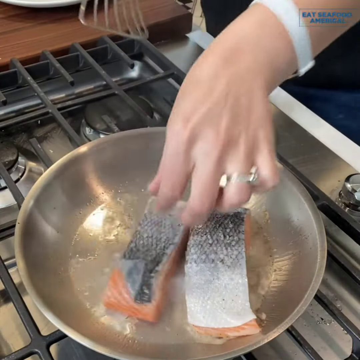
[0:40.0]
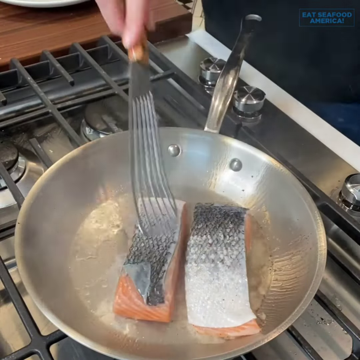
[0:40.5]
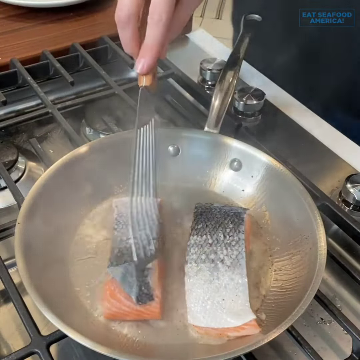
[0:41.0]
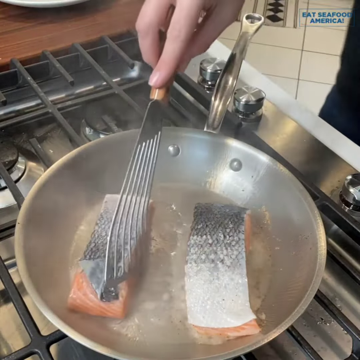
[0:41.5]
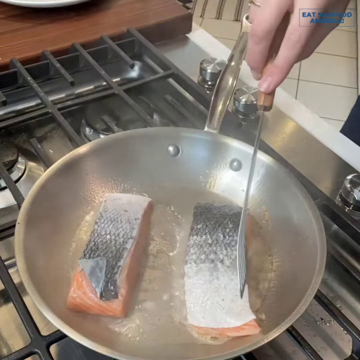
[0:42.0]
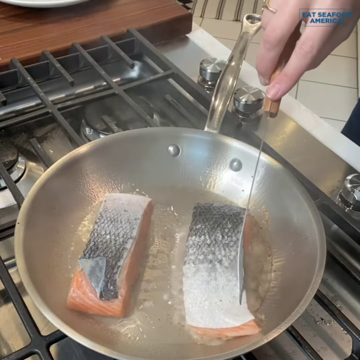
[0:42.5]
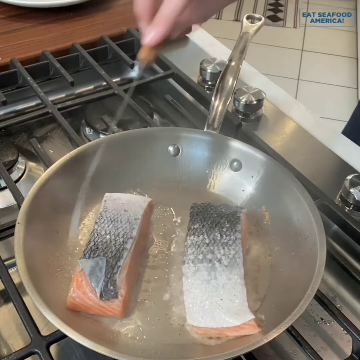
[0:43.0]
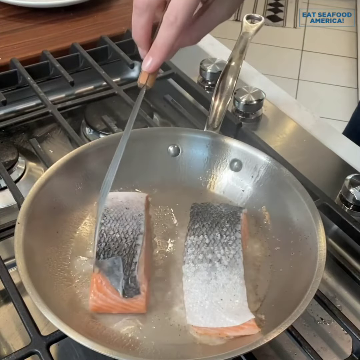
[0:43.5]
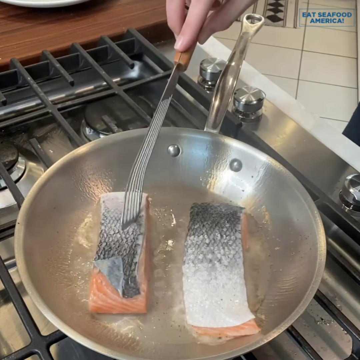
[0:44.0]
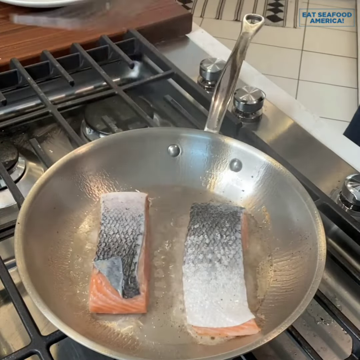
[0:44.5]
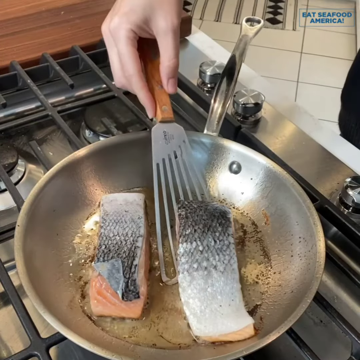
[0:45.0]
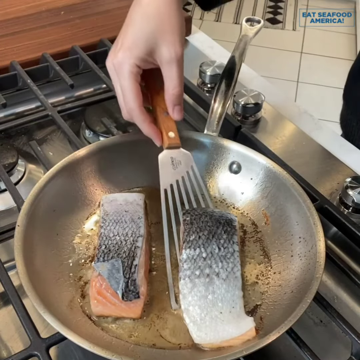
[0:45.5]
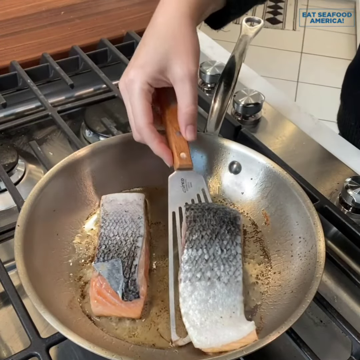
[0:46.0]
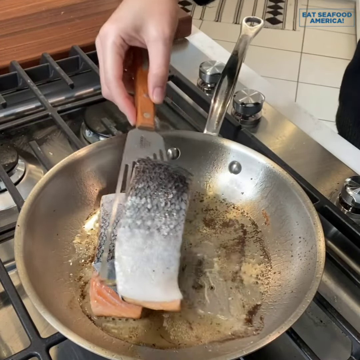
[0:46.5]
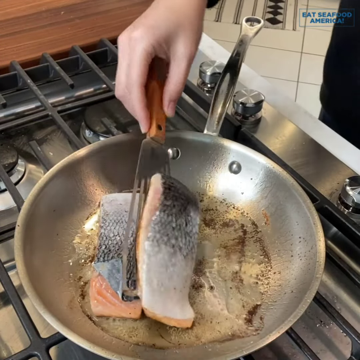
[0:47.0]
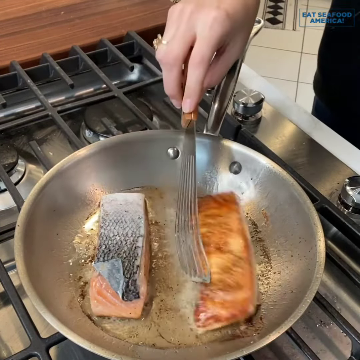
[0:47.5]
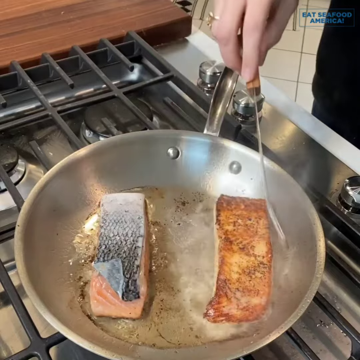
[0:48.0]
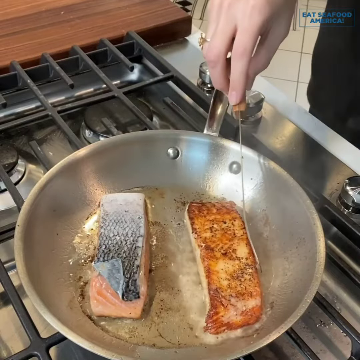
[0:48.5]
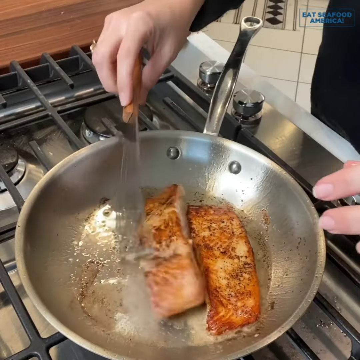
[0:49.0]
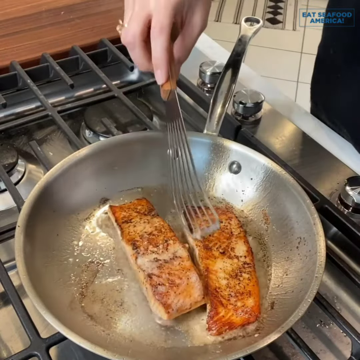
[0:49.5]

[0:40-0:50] The fish is frying in oil on the fire. A human hand uses a spoon meant for frying to adjust the position of the fish, flipping it over to the other side so that it does not stick to the frying pan.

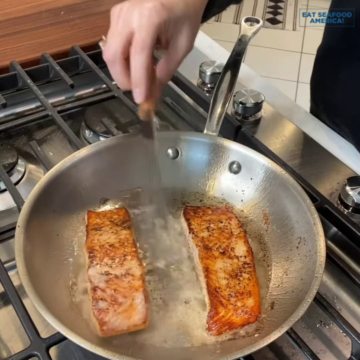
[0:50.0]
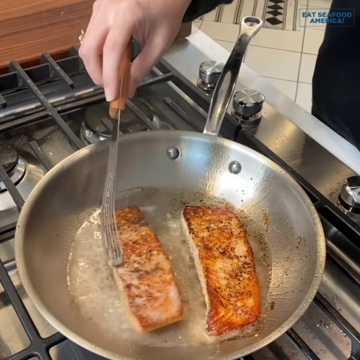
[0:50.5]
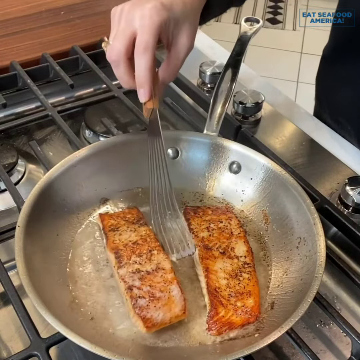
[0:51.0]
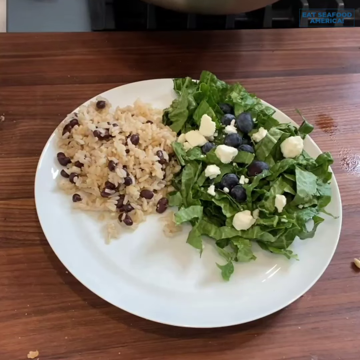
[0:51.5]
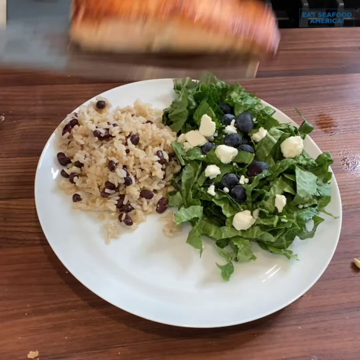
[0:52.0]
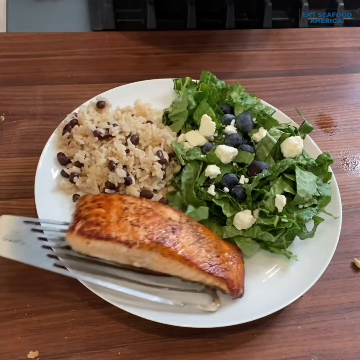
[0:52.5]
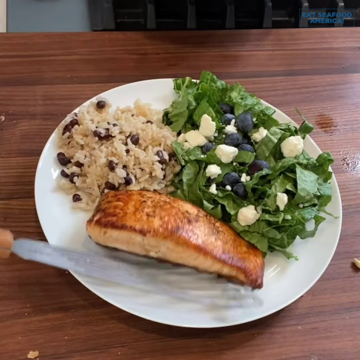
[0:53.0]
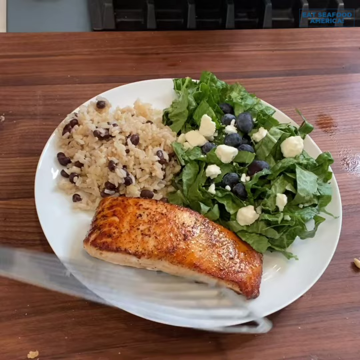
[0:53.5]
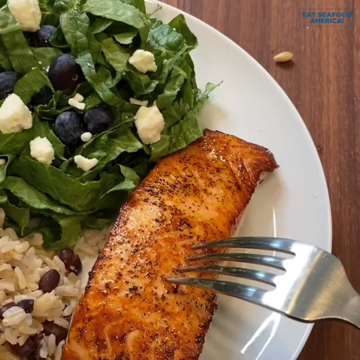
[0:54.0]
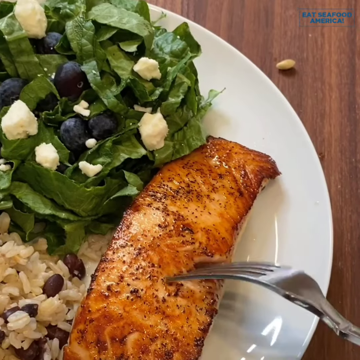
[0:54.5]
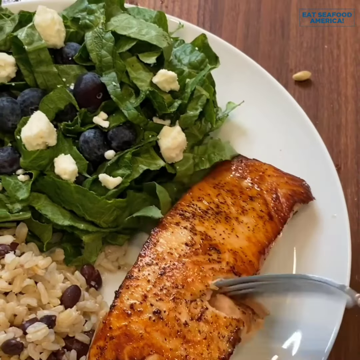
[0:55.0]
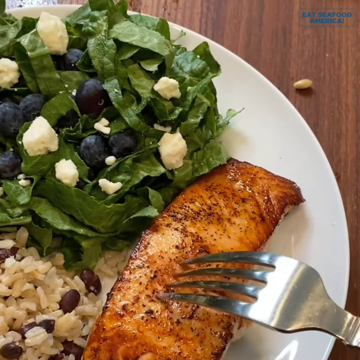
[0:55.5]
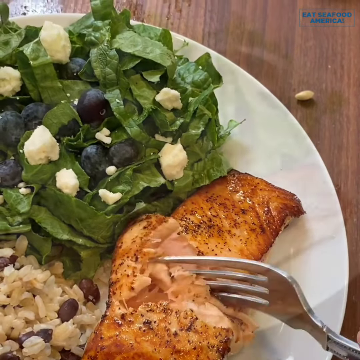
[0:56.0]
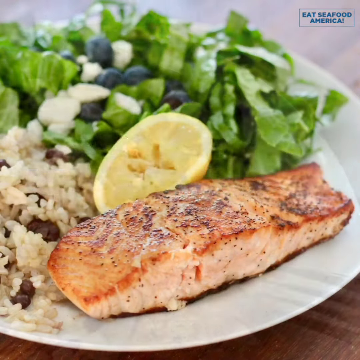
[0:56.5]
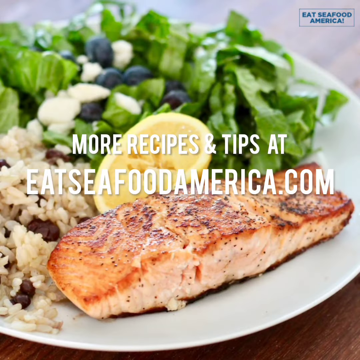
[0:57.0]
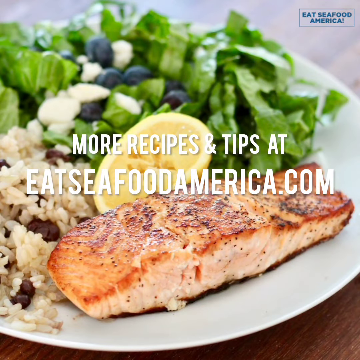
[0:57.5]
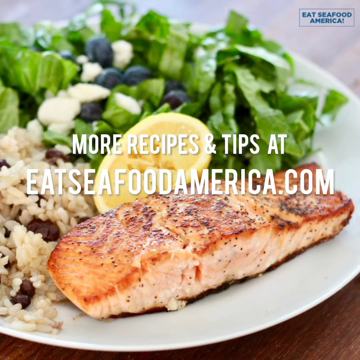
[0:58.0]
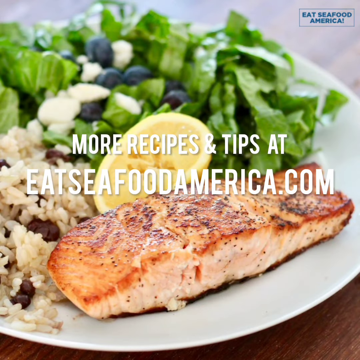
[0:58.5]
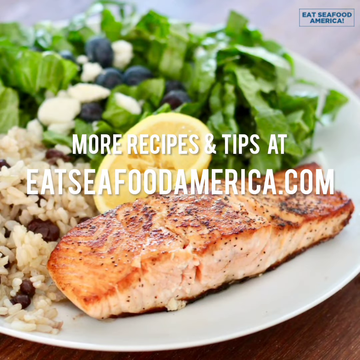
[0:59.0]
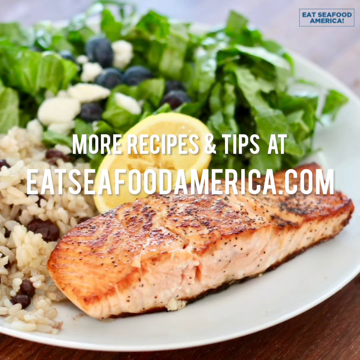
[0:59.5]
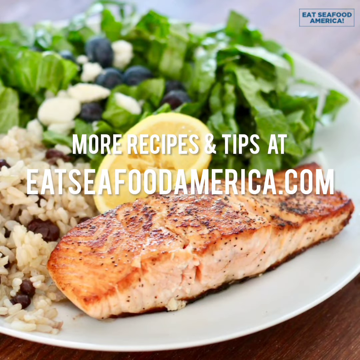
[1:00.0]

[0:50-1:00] The fish continues frying and is adjusted in the frying pan. The finished fish is then shown, soft, on a plate along with vegetables, a strawberry, a berry and many condiments, with a fork for eating the food.